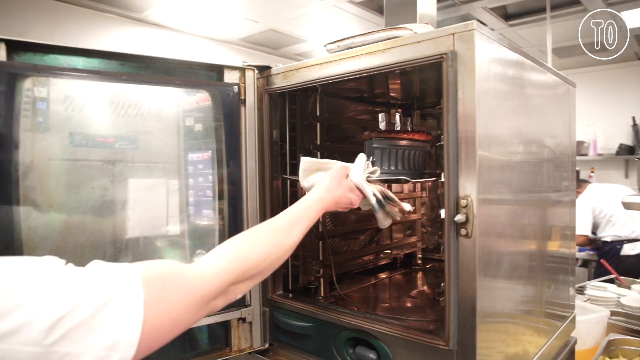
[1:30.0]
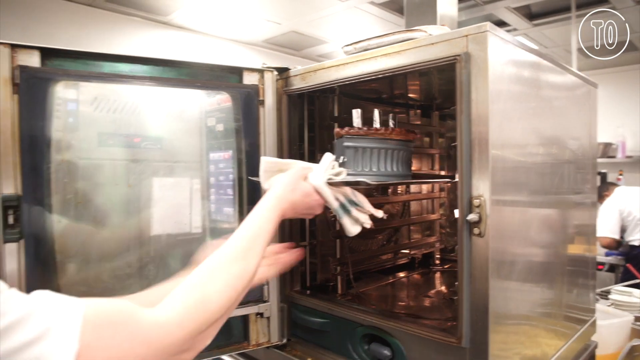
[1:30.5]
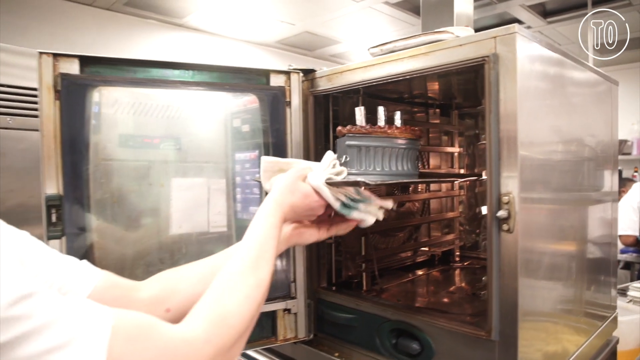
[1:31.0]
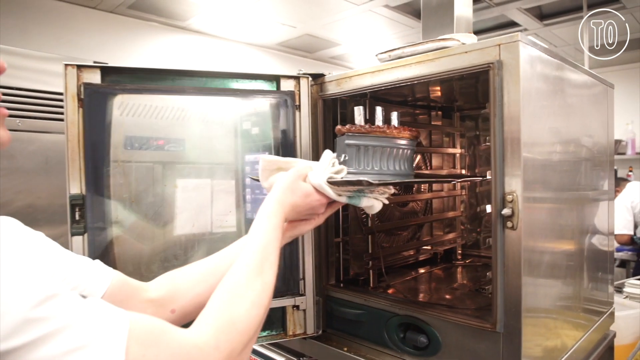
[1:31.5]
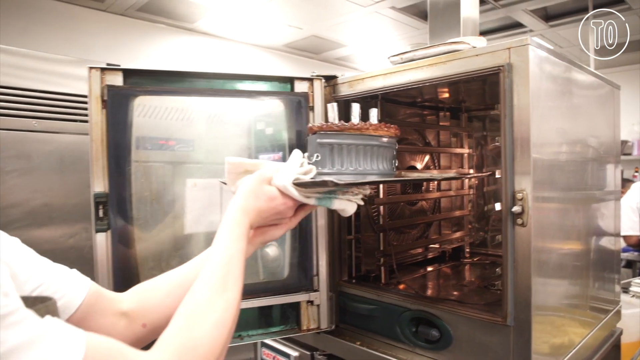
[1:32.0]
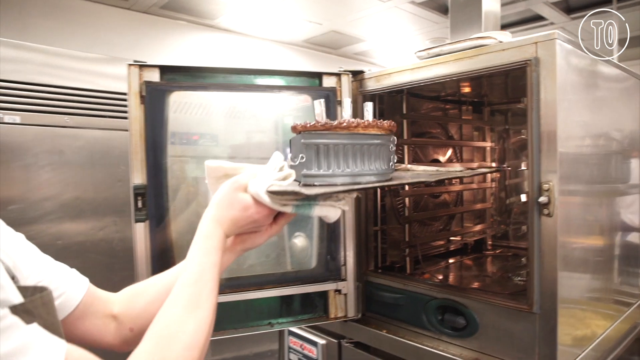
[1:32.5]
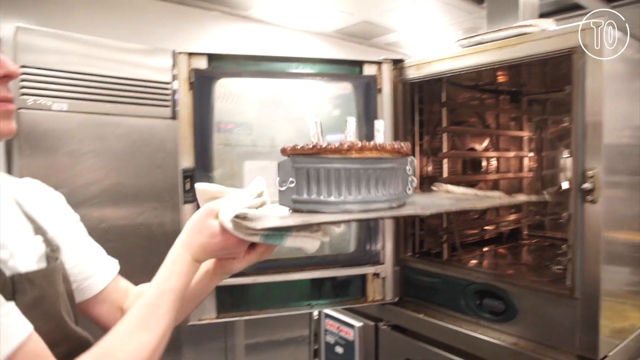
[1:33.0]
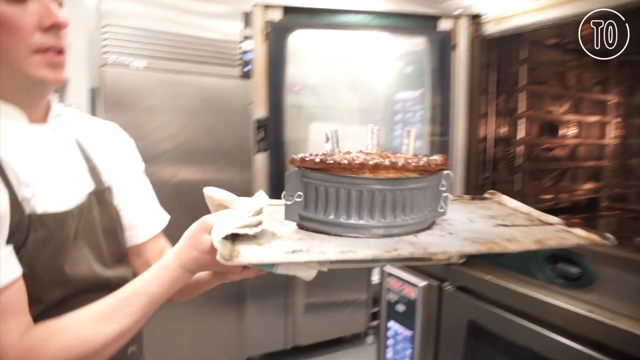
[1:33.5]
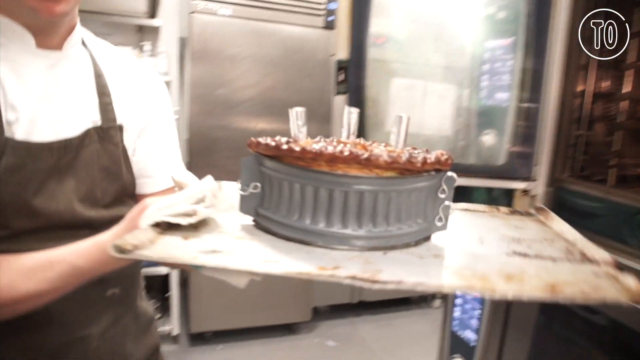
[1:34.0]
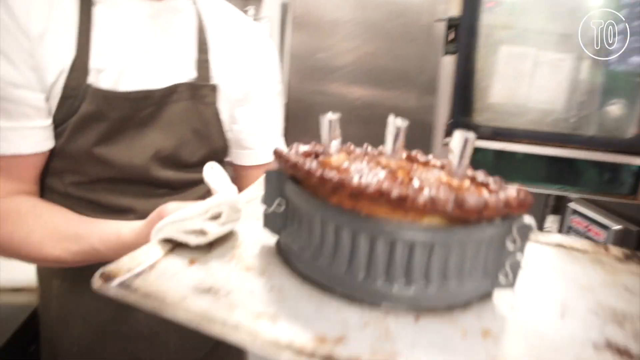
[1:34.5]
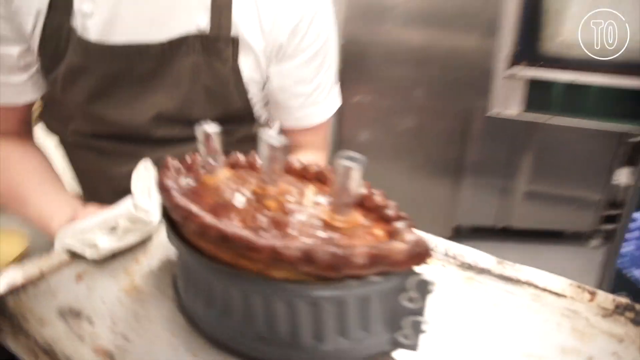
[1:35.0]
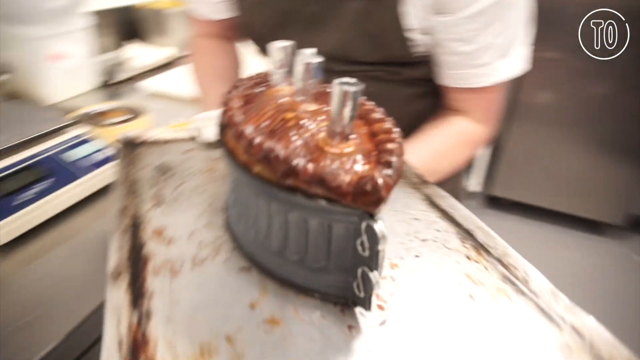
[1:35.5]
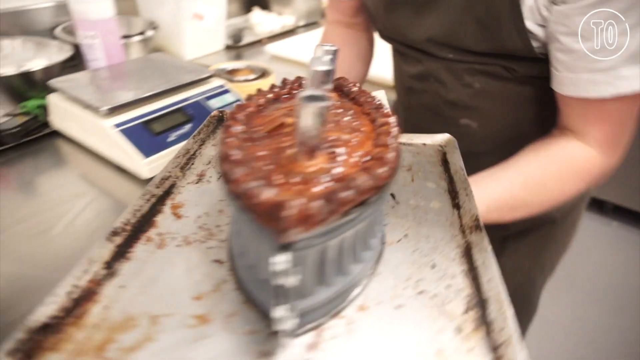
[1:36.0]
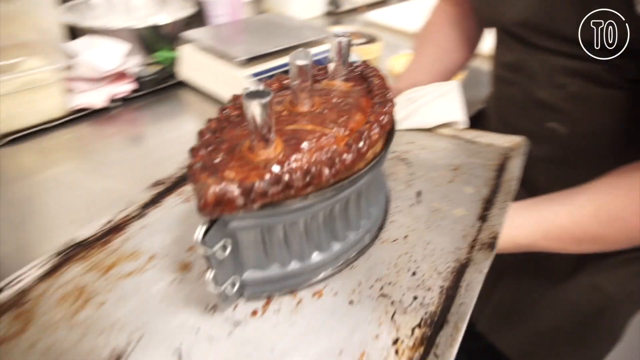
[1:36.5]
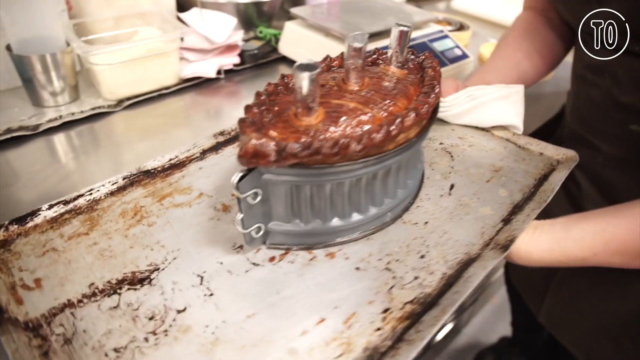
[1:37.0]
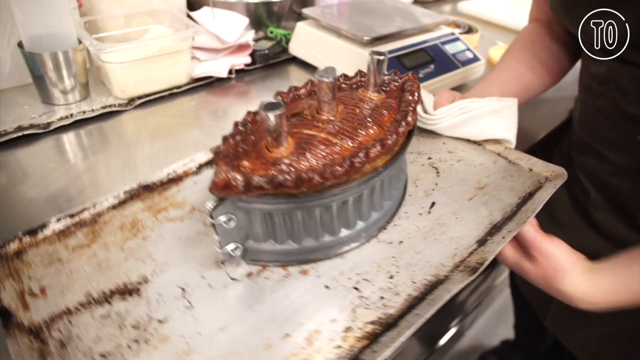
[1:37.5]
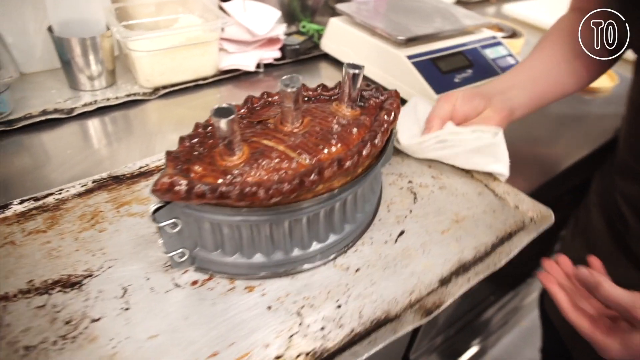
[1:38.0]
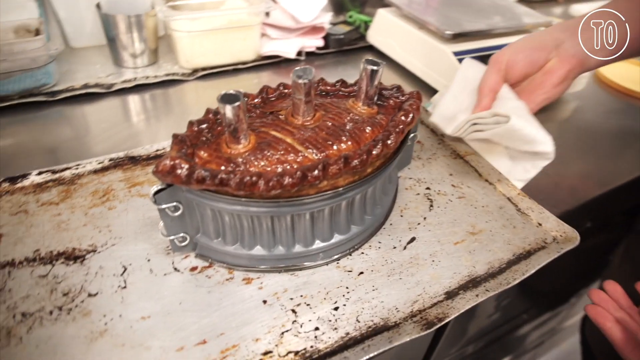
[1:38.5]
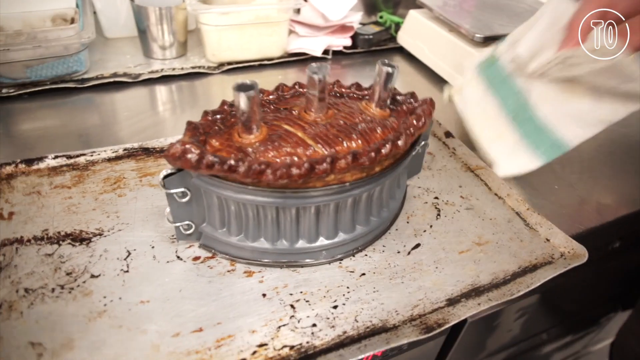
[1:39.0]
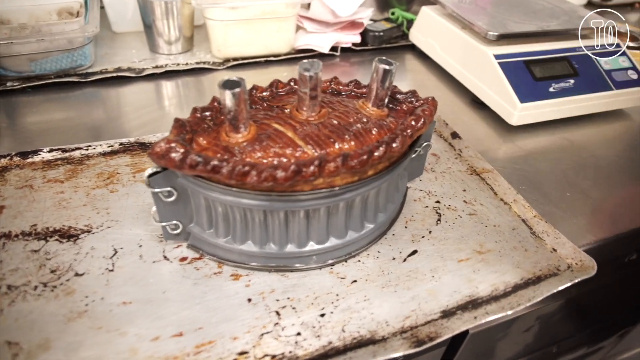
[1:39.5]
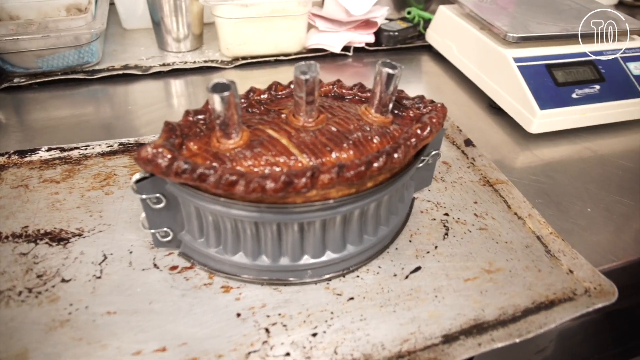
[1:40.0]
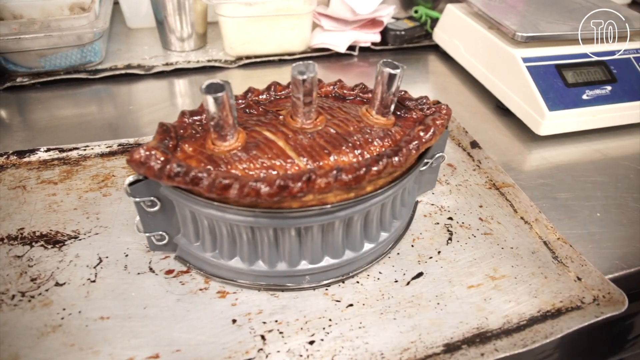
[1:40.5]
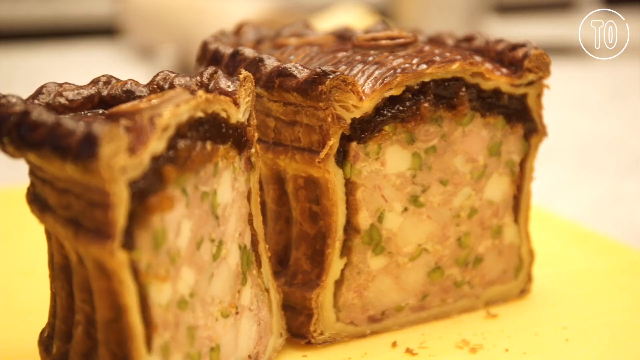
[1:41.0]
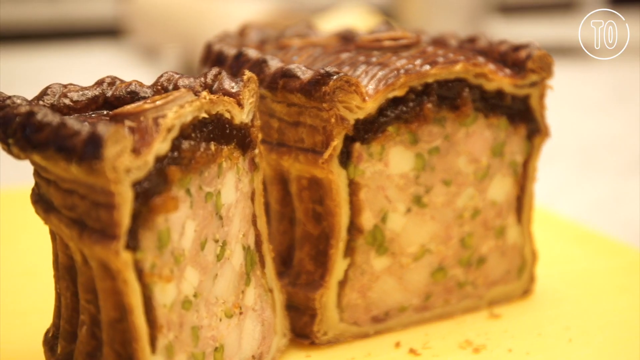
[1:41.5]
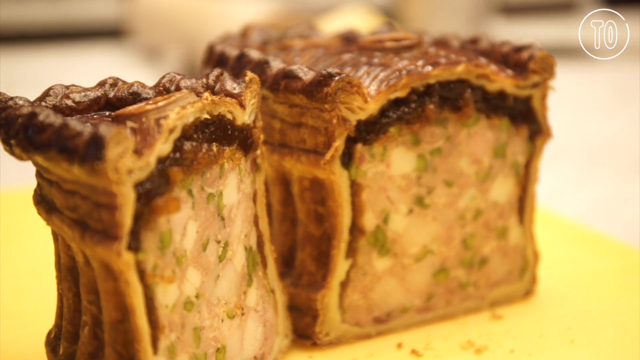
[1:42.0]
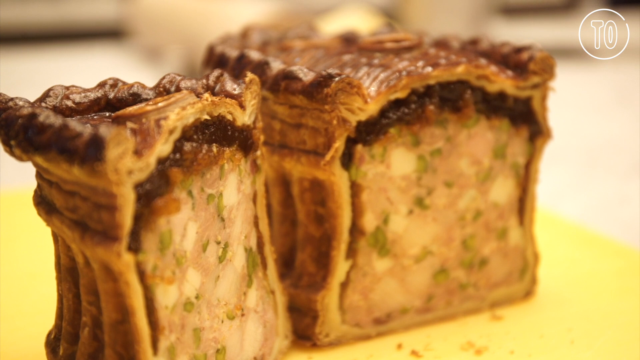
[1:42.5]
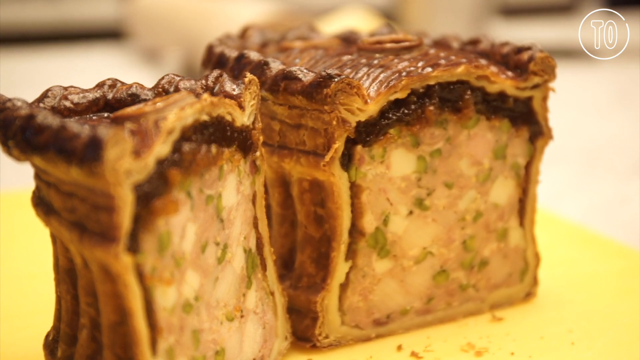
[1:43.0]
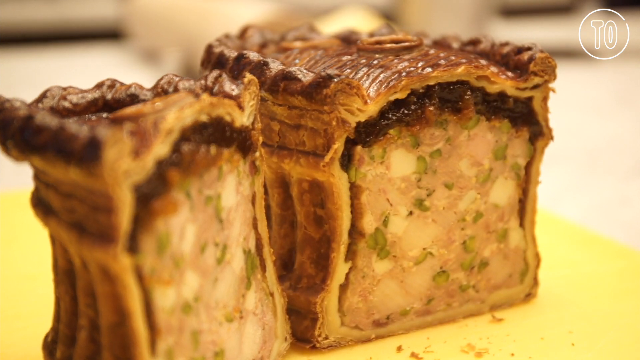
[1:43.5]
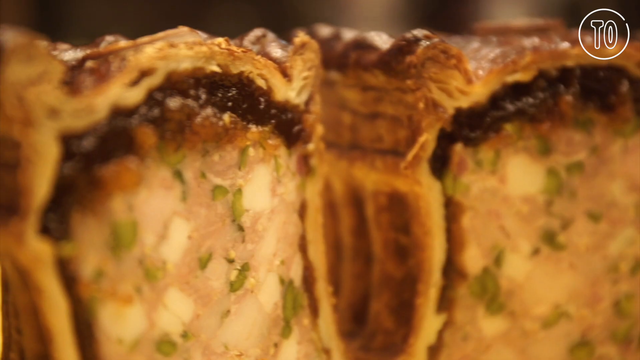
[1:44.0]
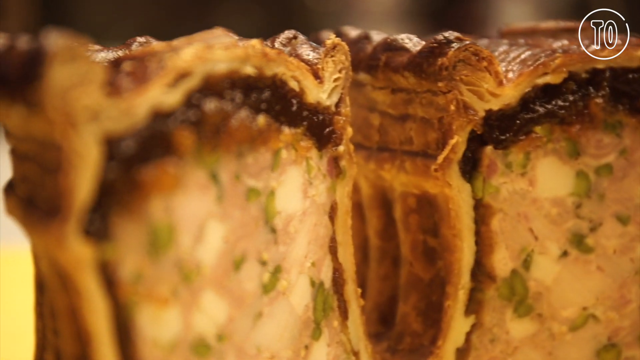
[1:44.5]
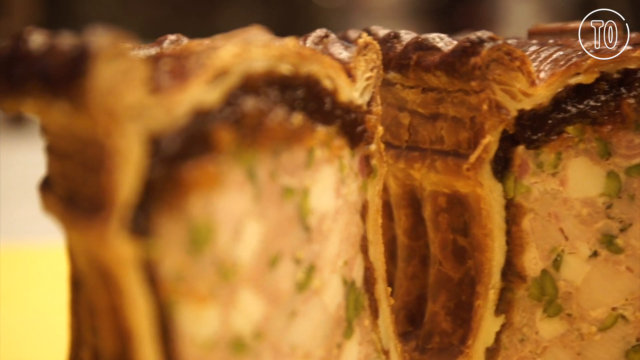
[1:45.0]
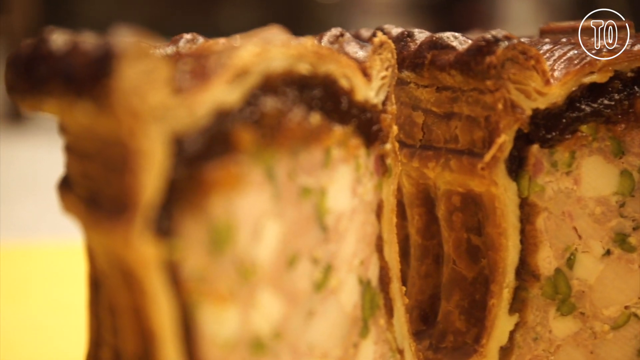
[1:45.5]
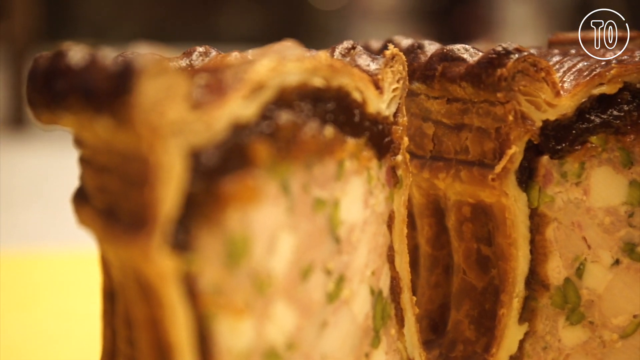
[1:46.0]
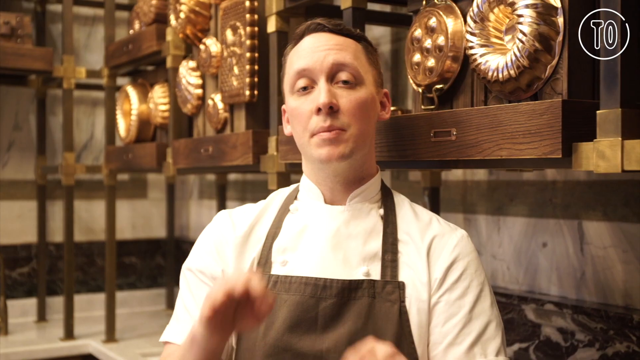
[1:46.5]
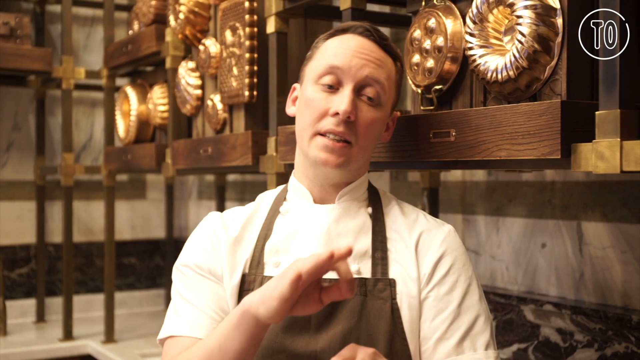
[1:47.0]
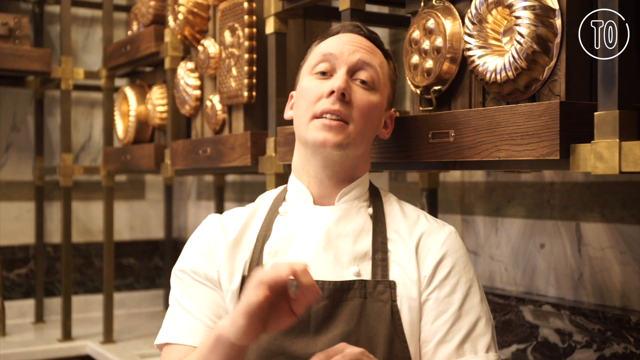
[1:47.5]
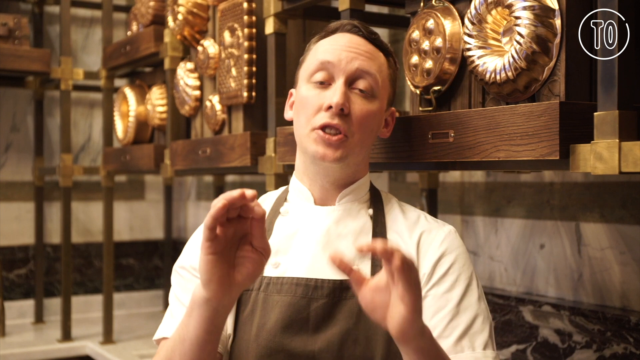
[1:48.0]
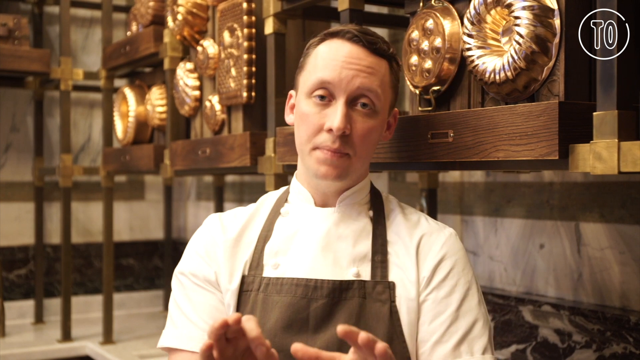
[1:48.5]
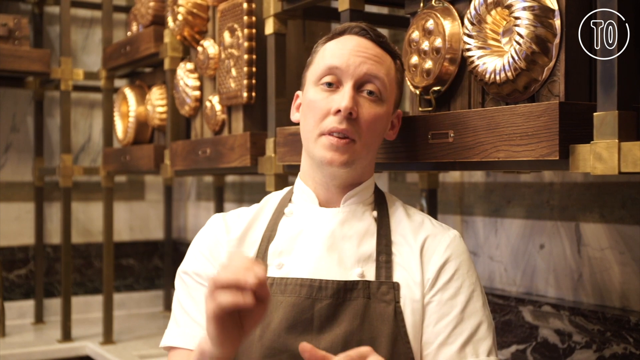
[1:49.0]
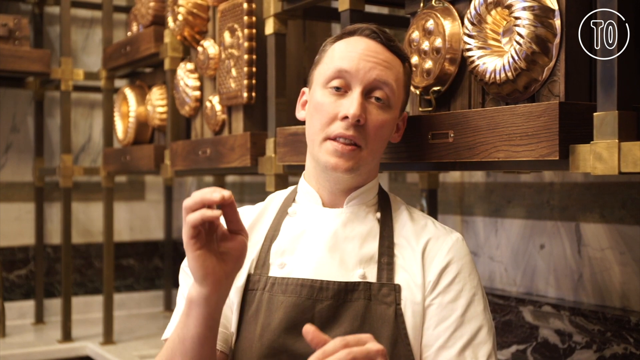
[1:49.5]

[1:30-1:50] The scene shows an oven. A person holding a towel in the right hand has grabbed the pan containing the pastry. They slide it out with the right hand, then hold the left hand underneath to brace it once it is almost out of the oven. They slowly and precisely back away and begin to turn toward the camera with the pastry, holding the pan with both hands to stabilize it. The camera pans down toward the pie. The person continues over to the table area and slowly and gently places it down on the table. Three silver pipes stick out of the pastry, which is extremely hot, and the top layer of the pie is golden brown.